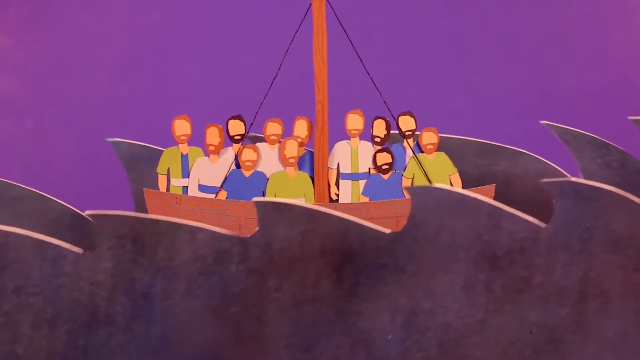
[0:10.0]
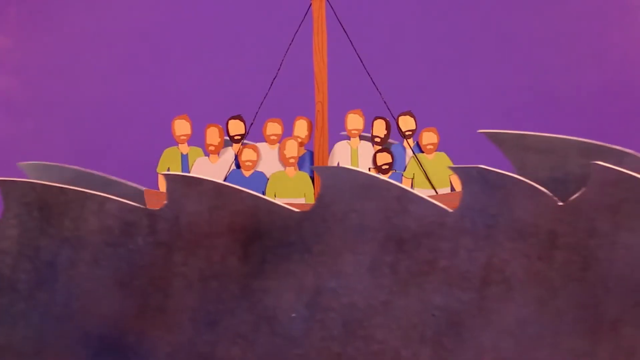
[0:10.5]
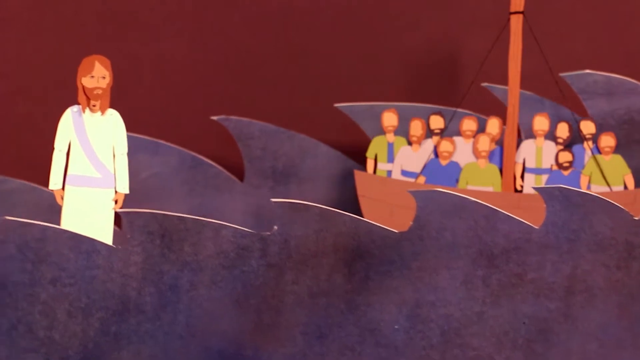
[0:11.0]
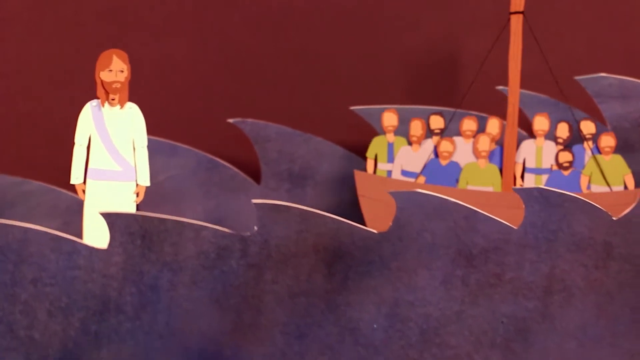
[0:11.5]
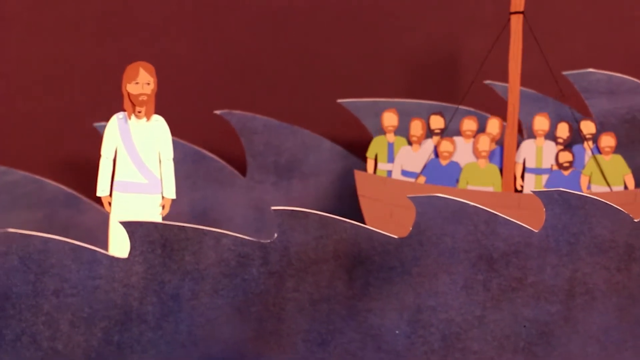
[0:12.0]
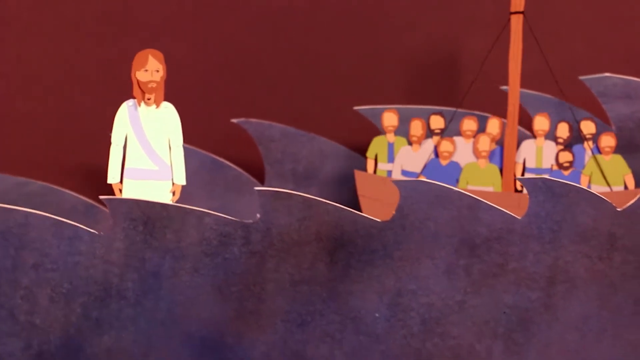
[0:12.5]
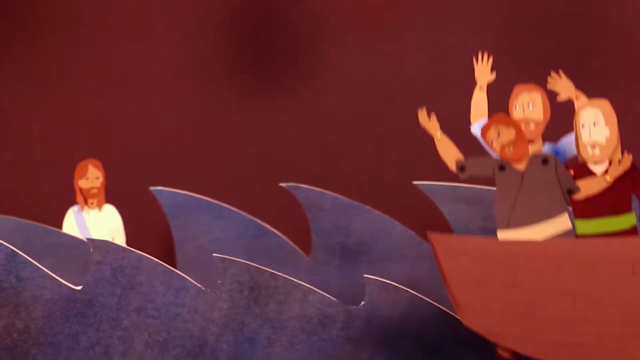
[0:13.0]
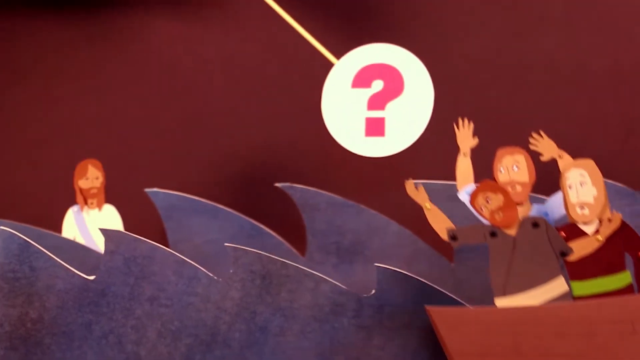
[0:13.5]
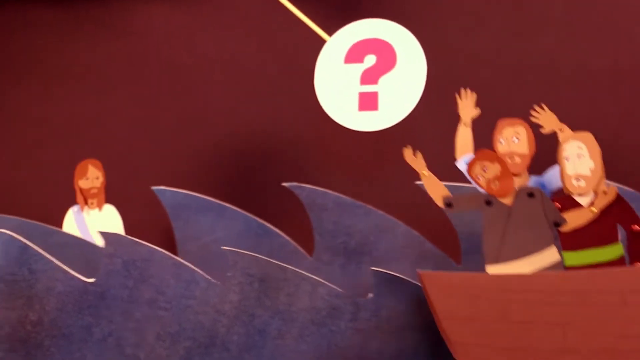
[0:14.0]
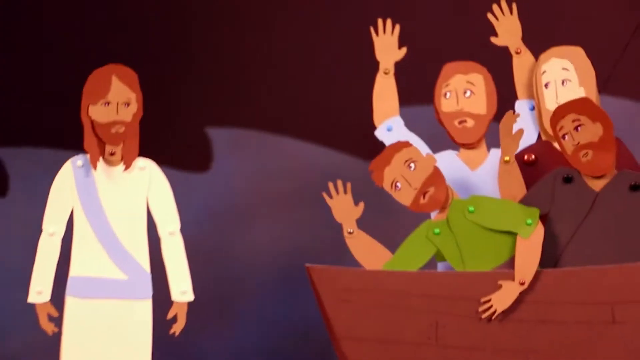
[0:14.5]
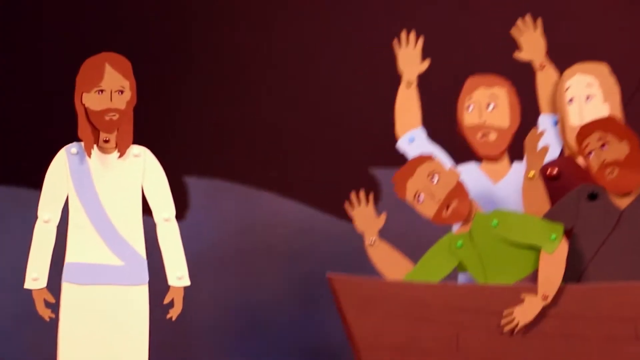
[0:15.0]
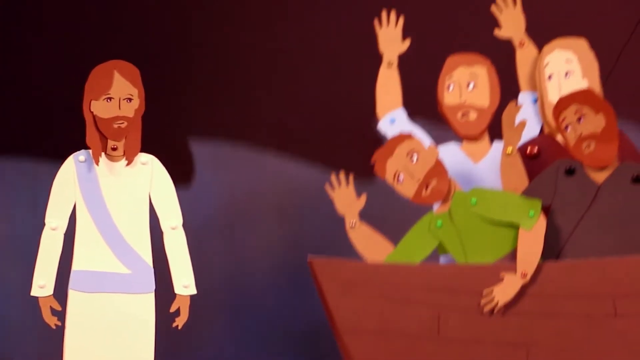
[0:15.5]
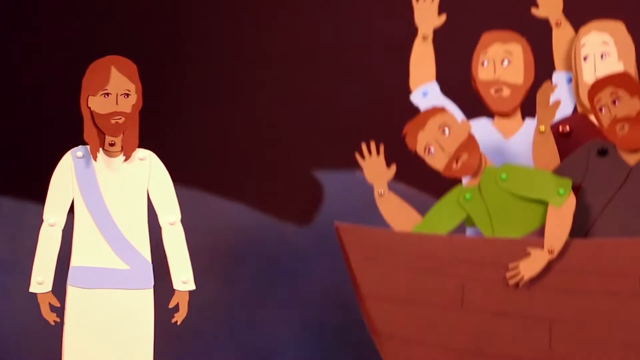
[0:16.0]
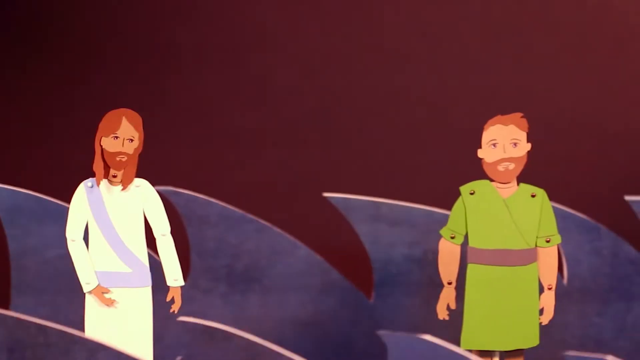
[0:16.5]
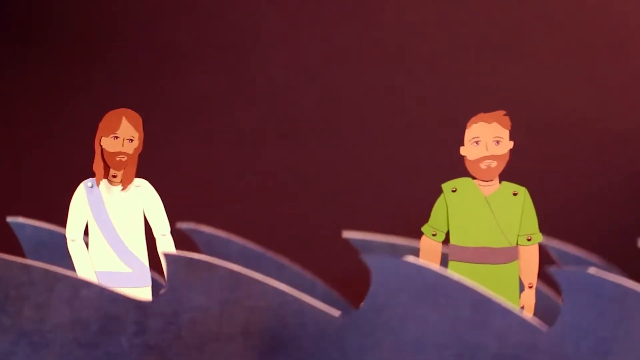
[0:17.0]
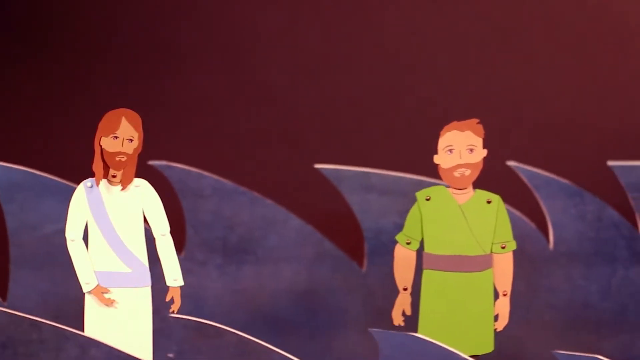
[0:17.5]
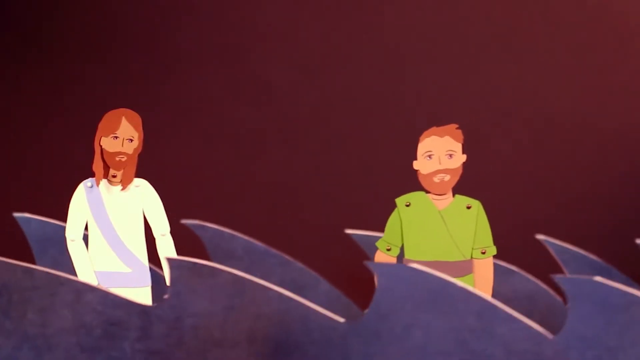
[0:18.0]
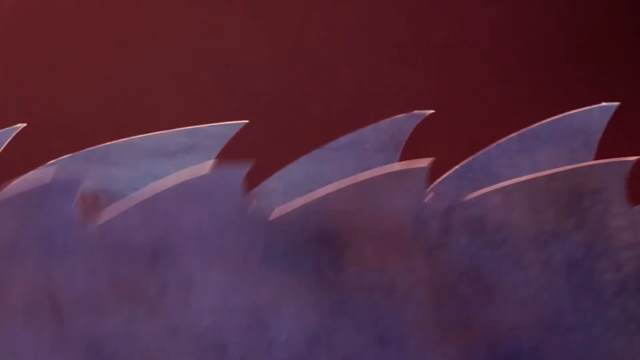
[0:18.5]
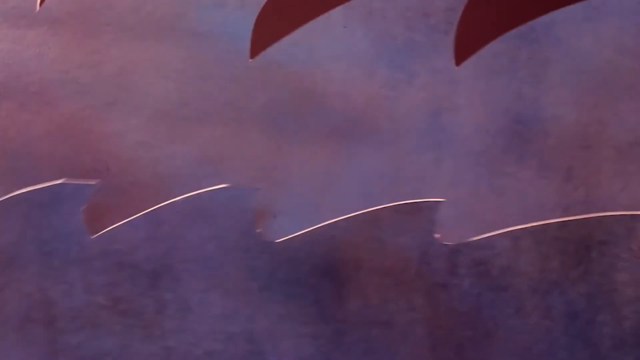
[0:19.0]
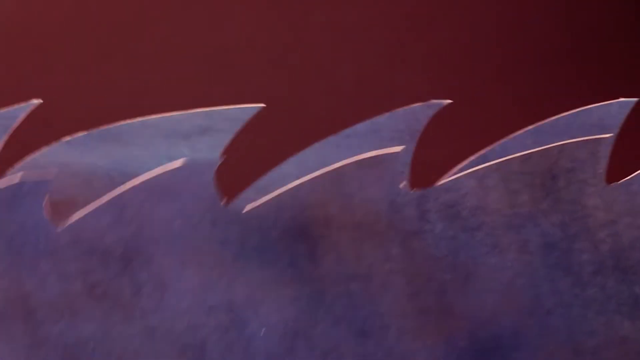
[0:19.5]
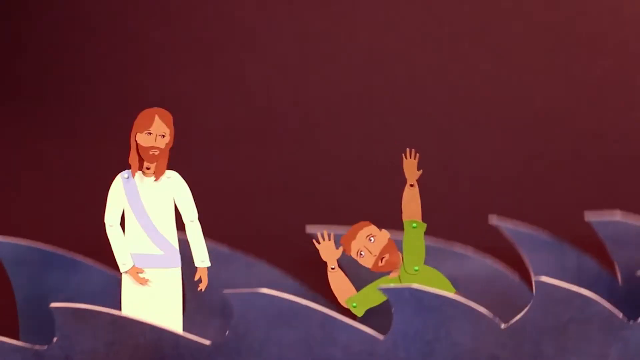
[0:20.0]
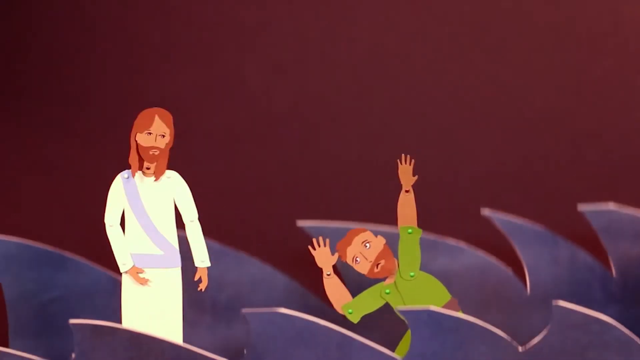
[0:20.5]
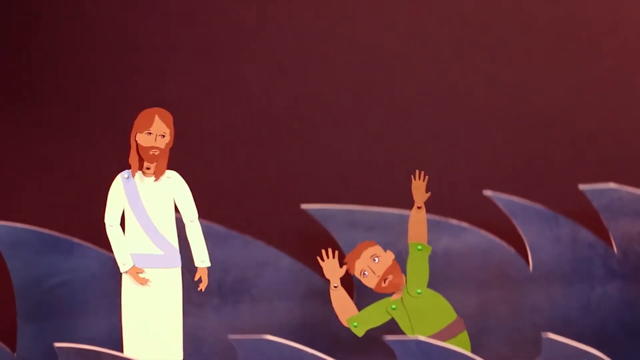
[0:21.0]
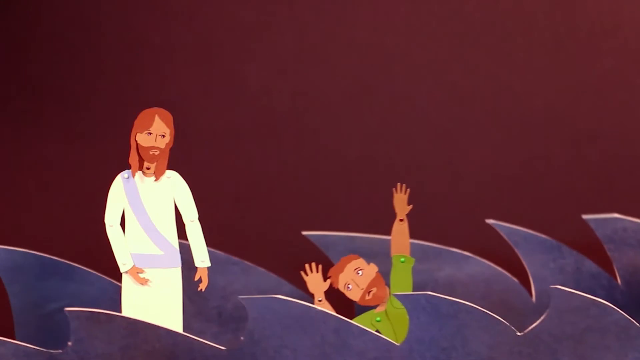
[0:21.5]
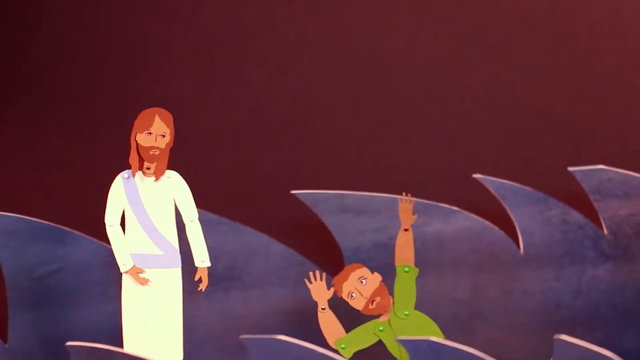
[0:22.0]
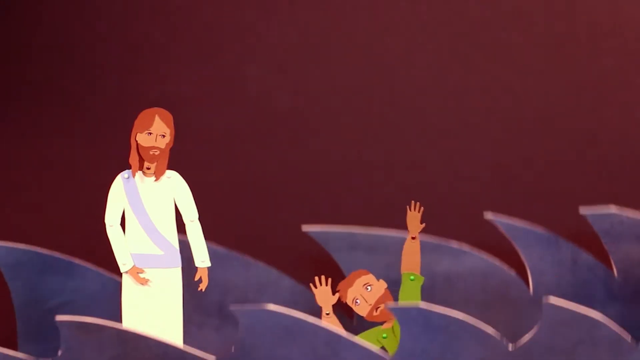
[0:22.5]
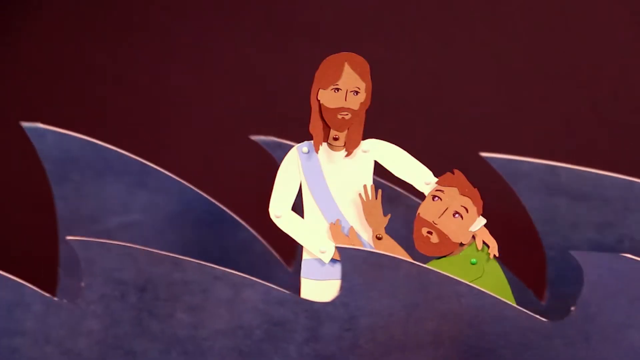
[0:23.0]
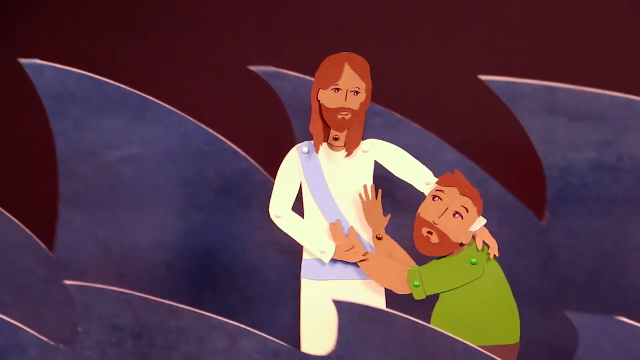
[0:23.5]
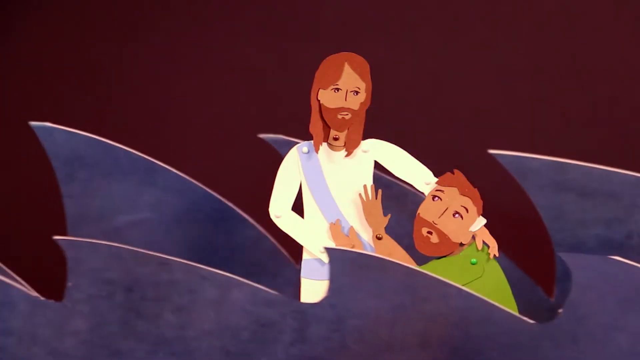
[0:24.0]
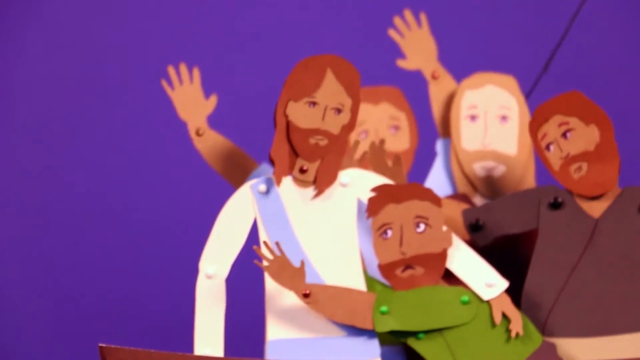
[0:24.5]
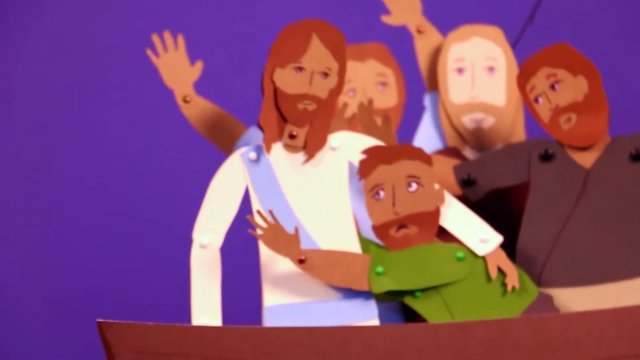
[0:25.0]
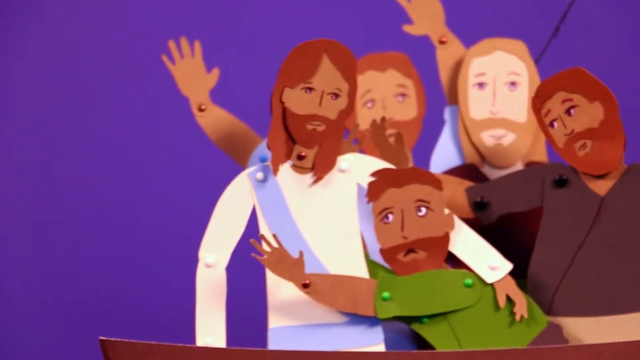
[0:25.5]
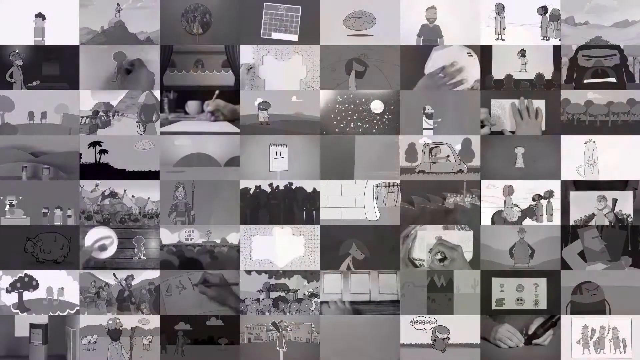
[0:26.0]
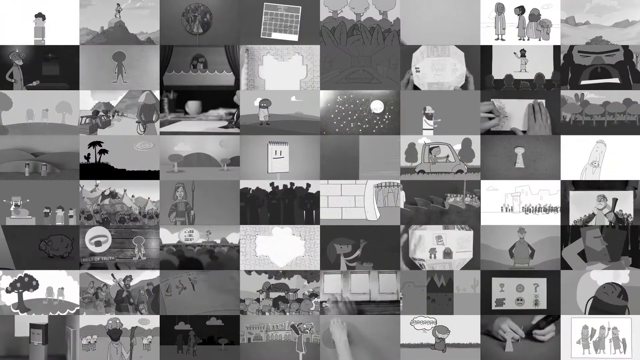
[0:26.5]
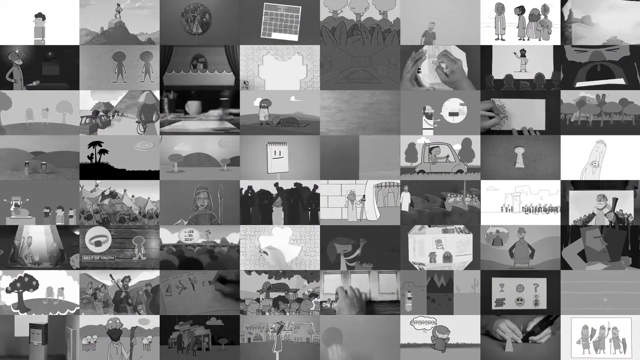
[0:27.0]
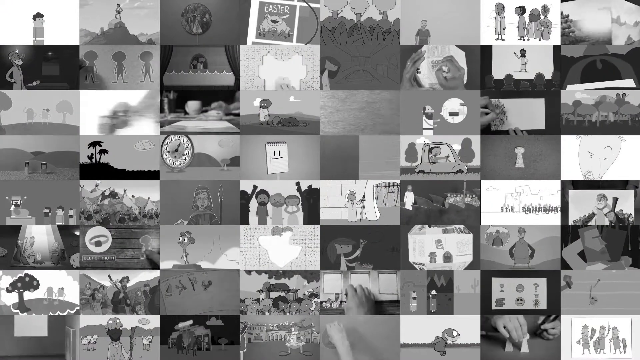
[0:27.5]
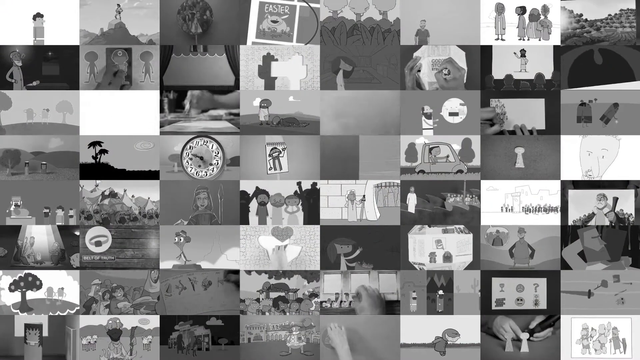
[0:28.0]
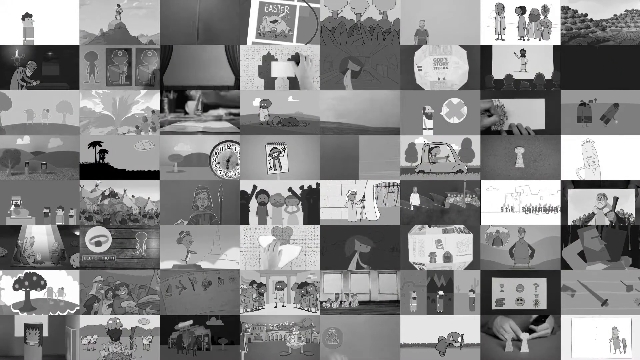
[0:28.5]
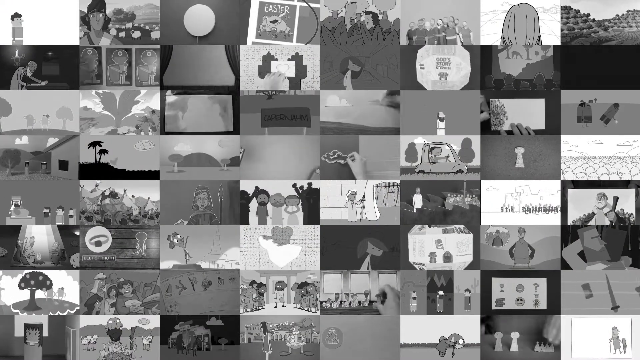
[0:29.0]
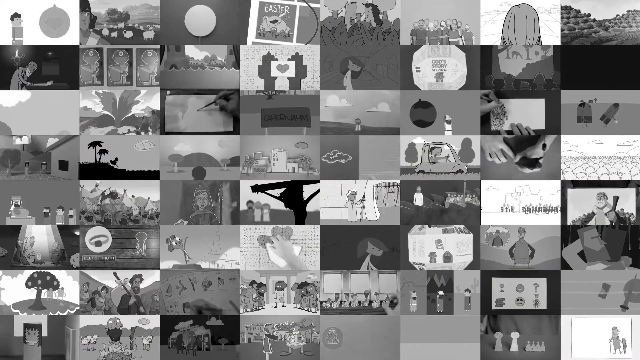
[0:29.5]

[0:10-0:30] The group of people is in the sailboat out on the water, which is dark, ominous looking and moving around violently. A person who looks like Jesus walks up from the left over to the boat as it sails. Jesus and Peter are both walking on water; Peter wears a gray-green shirt, and Jesus is dressed in white robes with a light purple sash around his waist and chest area. Peter begins to sink under the water, raising his hands up in distress, and Jesus grabs him by the back of the shirt and pulls him up above the water, saving him. Jesus, Peter and the rest of the boat crew are then in the boat sailing on the water. The picture collage from the beginning of the video appears on the background, but now all of the pictures on the back wall are in black and white instead of color.